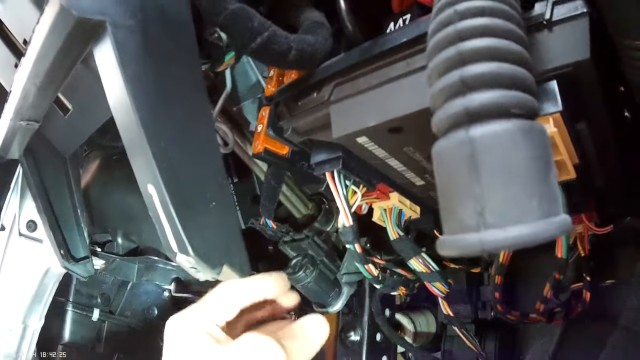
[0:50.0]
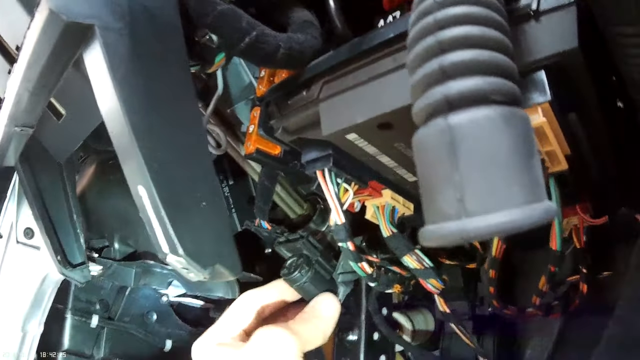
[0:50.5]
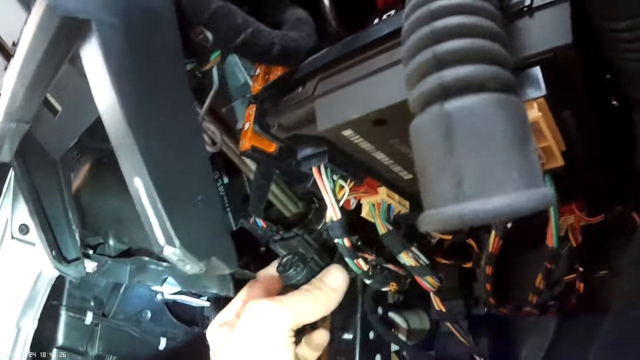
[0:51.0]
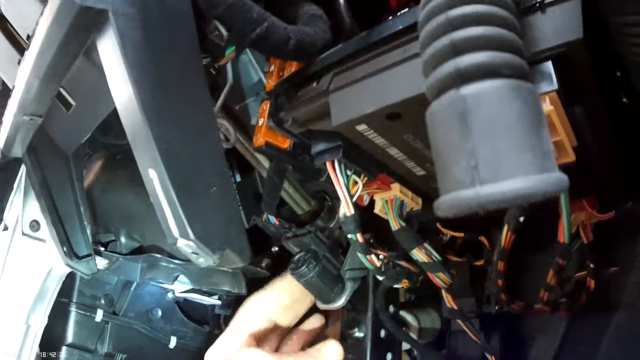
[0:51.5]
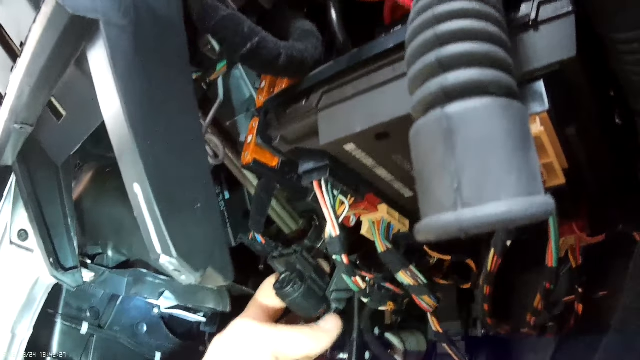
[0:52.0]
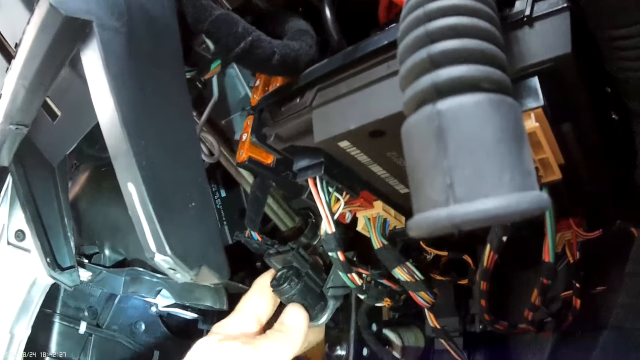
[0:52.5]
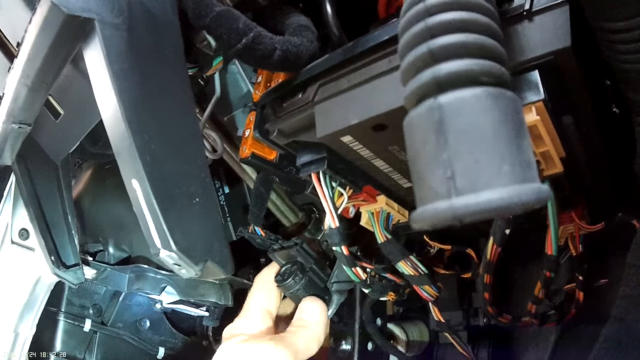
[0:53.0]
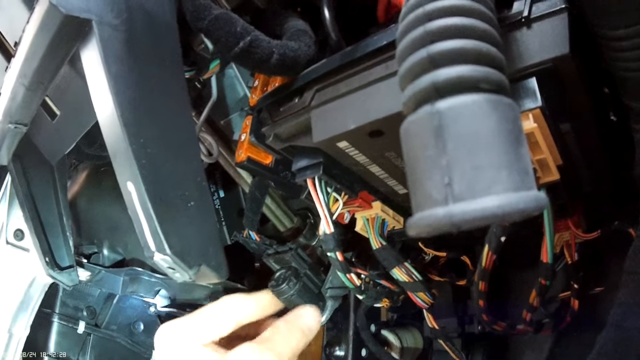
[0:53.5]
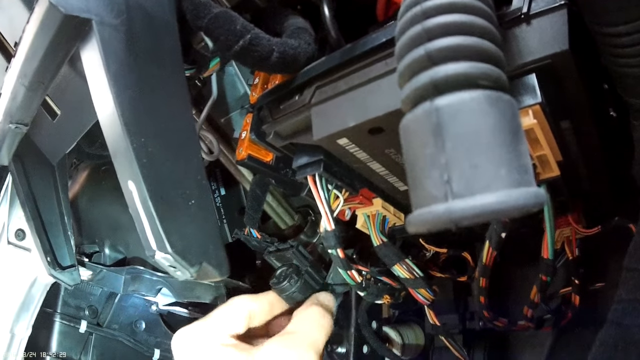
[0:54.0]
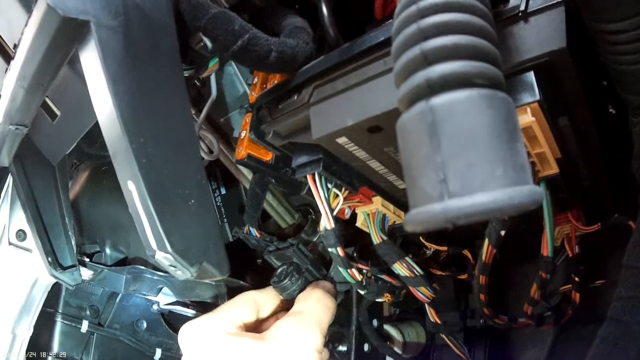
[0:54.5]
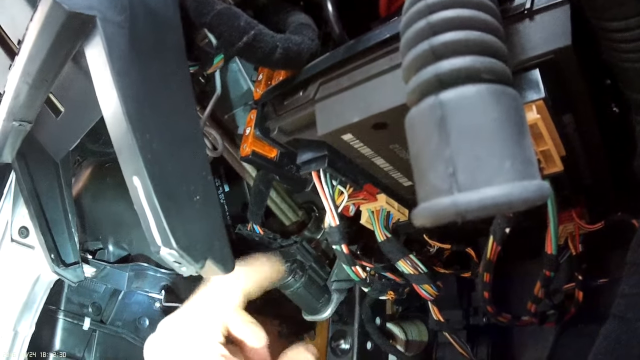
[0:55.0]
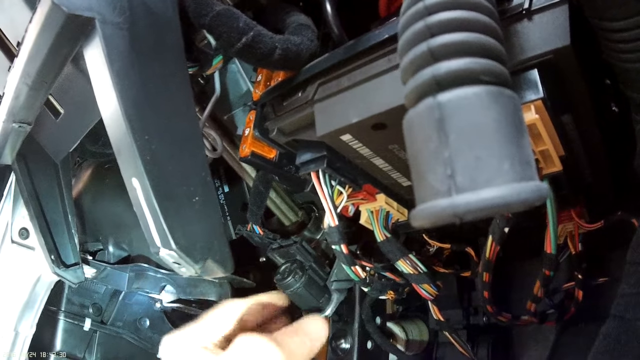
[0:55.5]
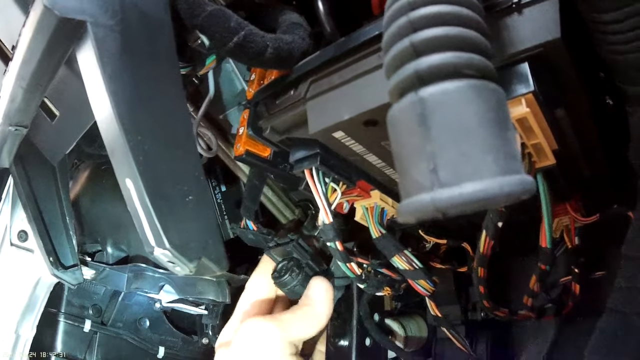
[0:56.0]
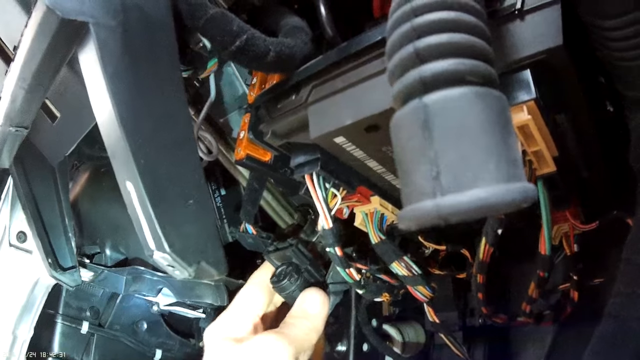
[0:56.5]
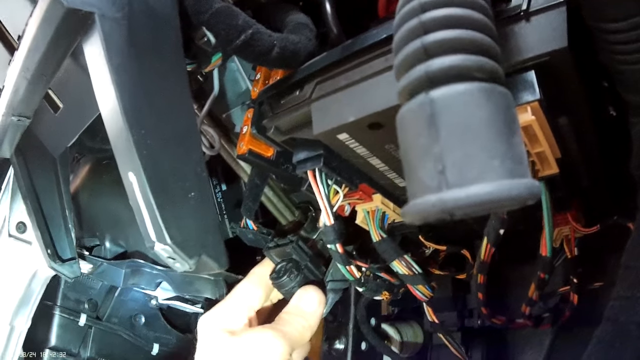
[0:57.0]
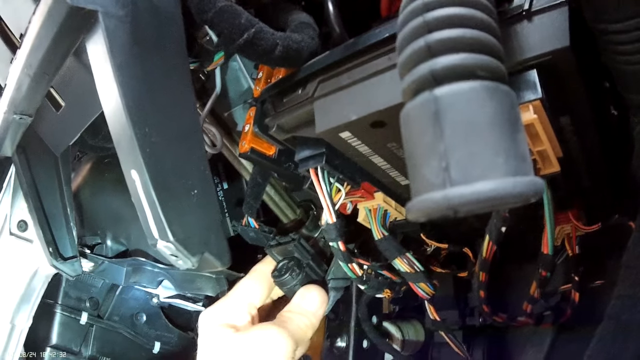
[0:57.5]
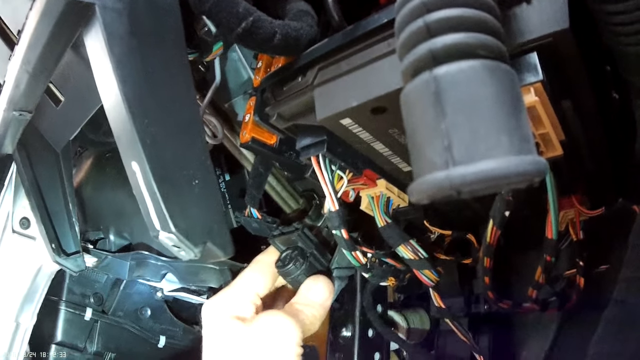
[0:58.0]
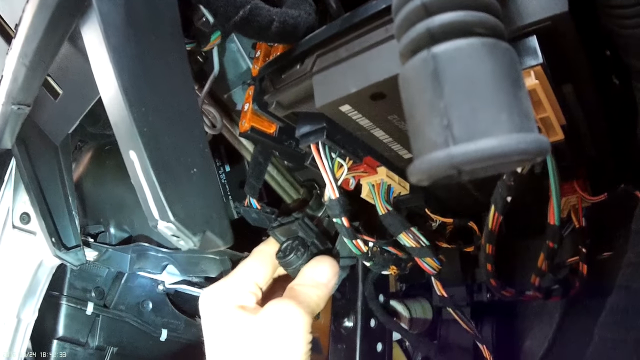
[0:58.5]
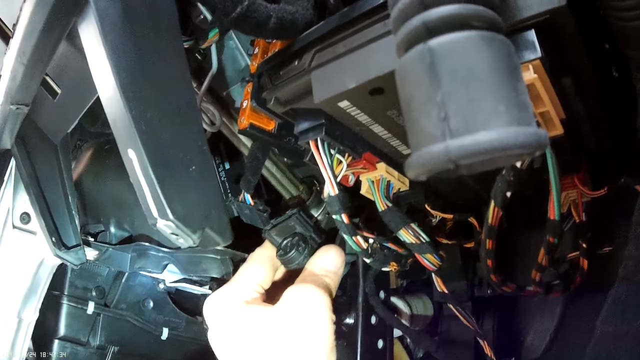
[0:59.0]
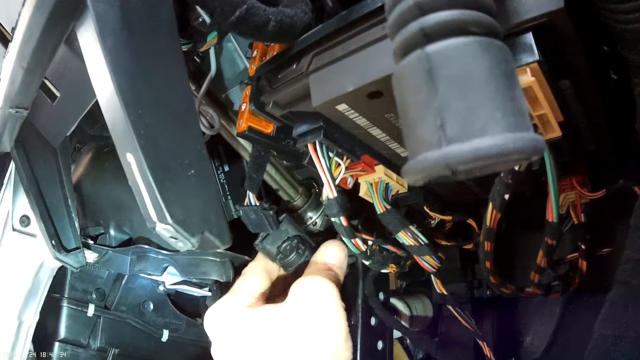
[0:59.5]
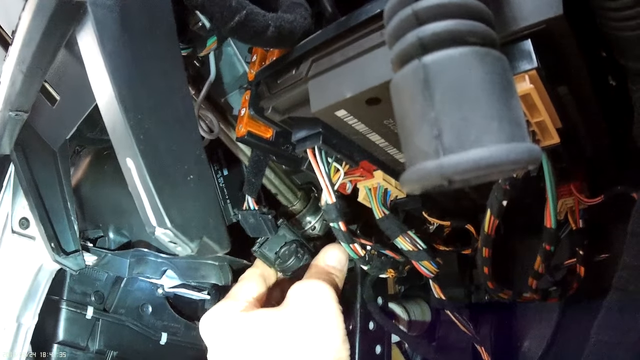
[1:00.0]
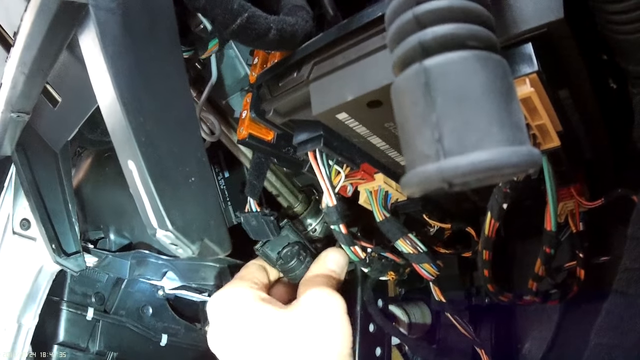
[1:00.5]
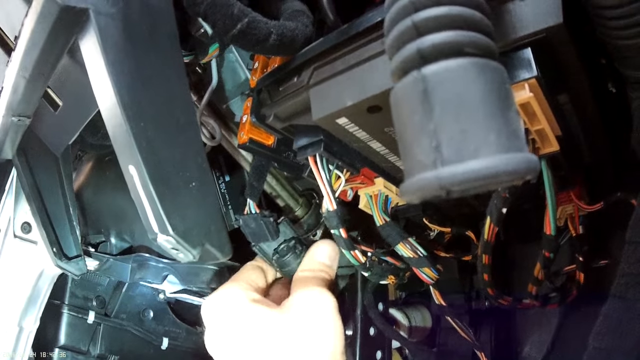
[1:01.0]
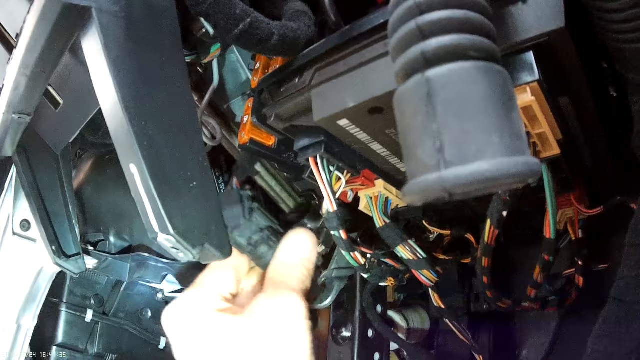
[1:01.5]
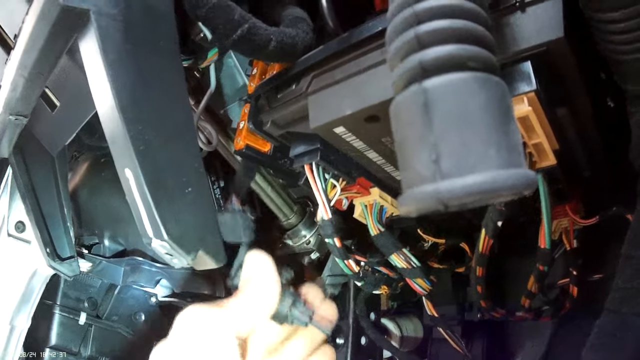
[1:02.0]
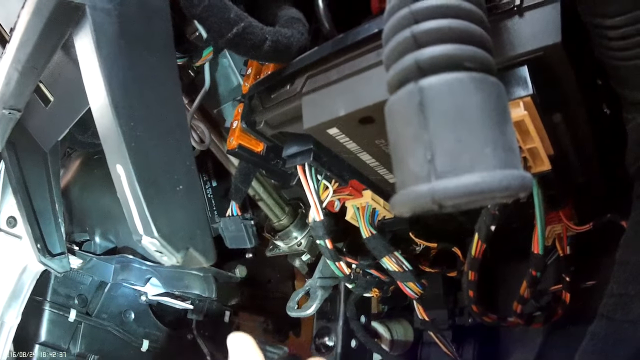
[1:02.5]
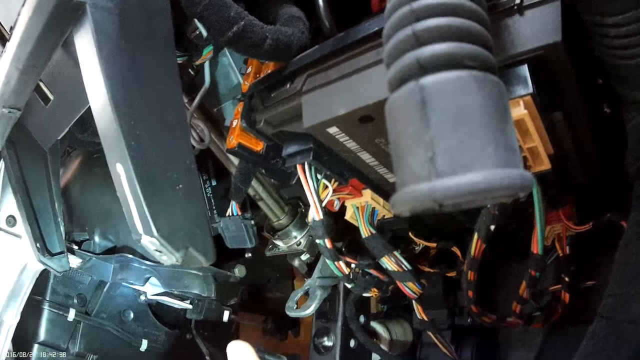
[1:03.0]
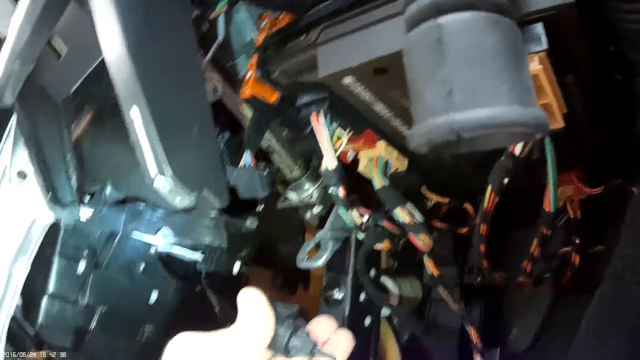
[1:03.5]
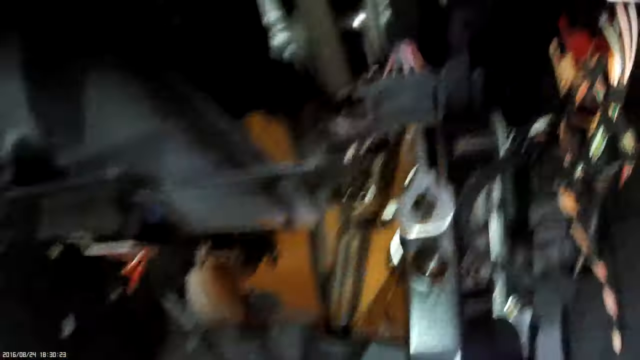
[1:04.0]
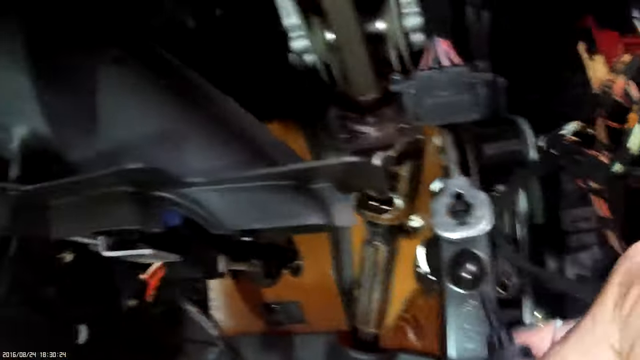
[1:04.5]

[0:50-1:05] The man is still working under the hood of the vehicle, which appears to be a motorcycle, though this is uncertain. He unclips the part from earlier and completely removes a black cylindrical piece from under the transmission, turning it counter-clockwise to take it out of a silver piece. The piece stands out and looks like it pops out of place easily with a counter-clockwise rotation; his white hand pulls it out without trouble.